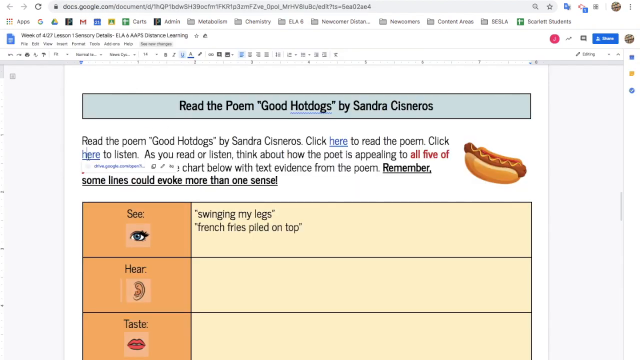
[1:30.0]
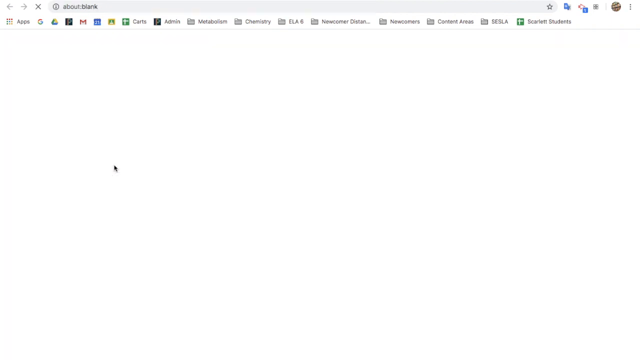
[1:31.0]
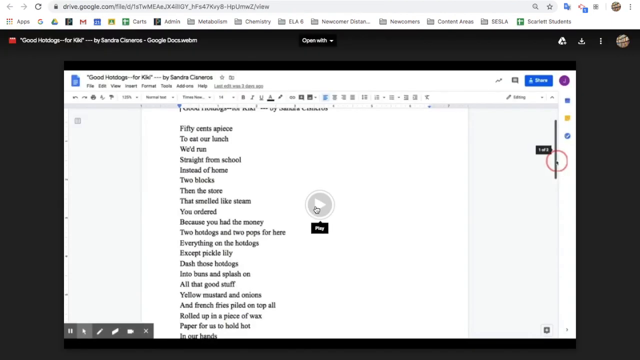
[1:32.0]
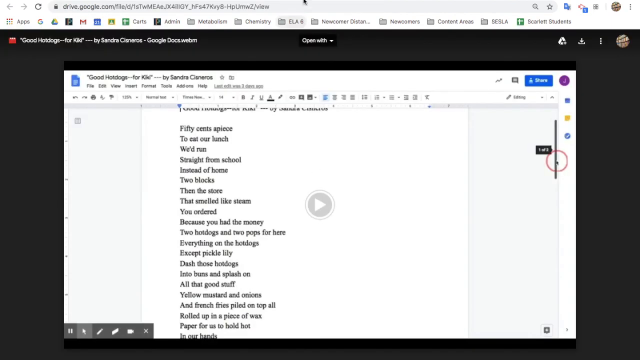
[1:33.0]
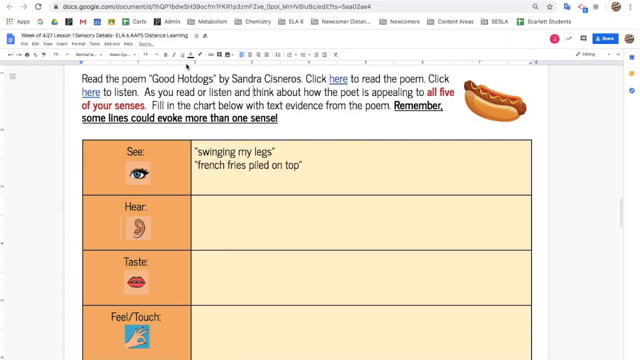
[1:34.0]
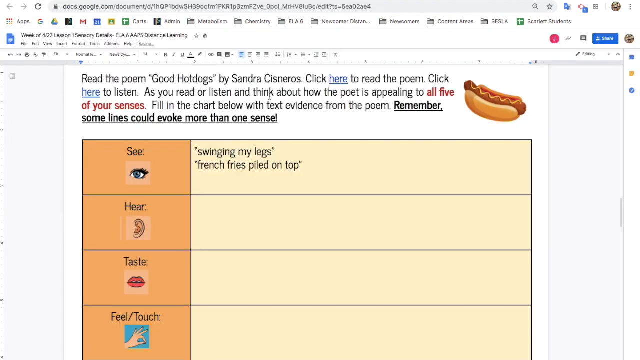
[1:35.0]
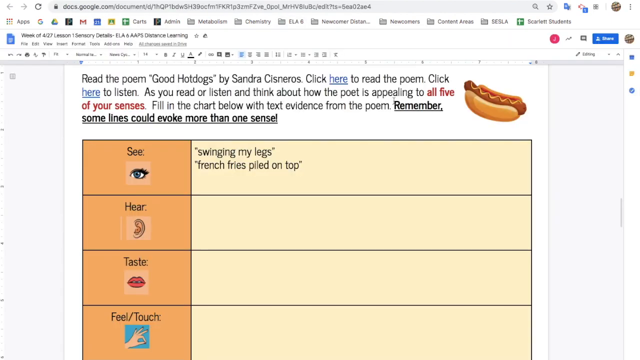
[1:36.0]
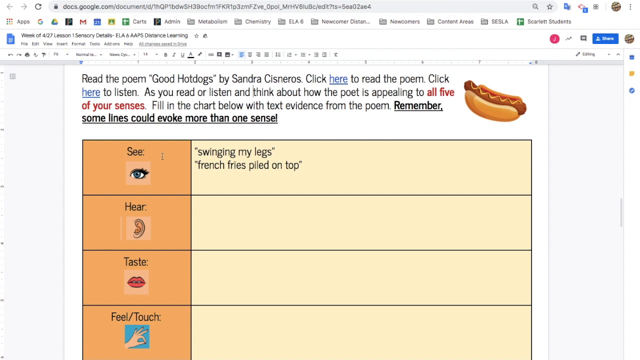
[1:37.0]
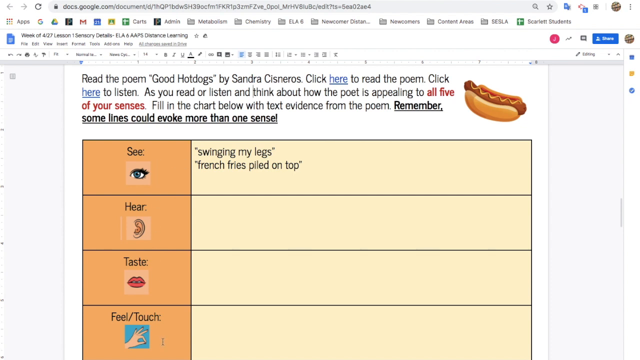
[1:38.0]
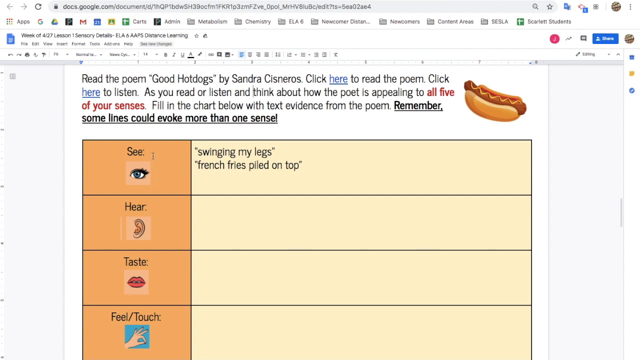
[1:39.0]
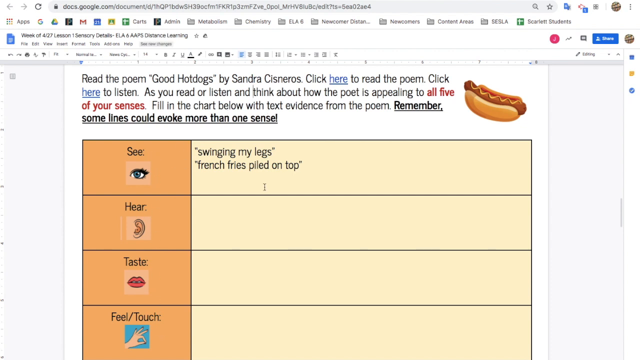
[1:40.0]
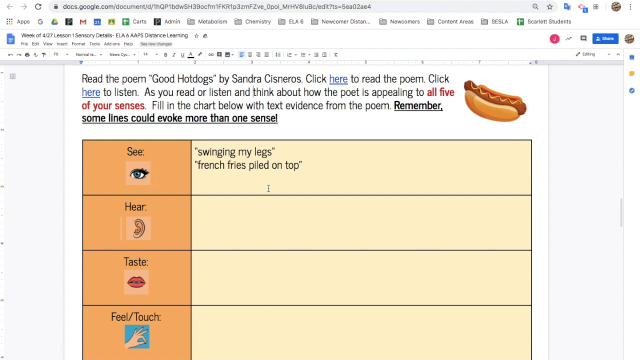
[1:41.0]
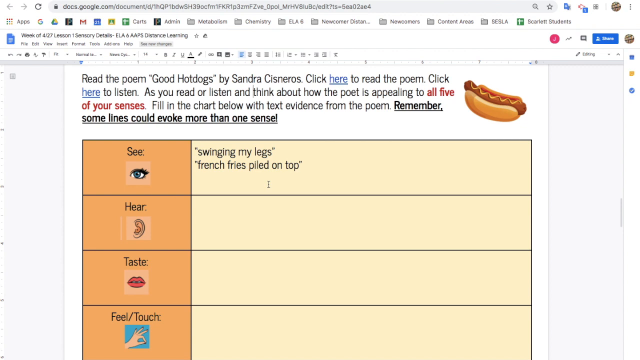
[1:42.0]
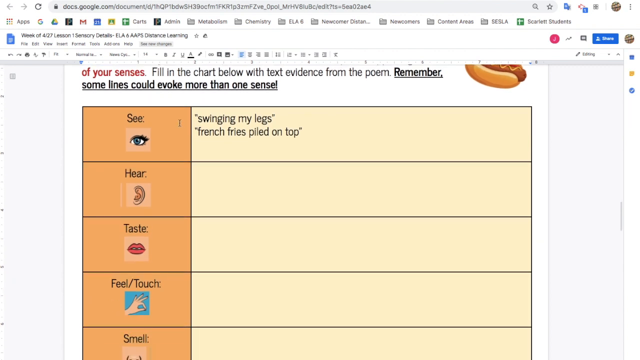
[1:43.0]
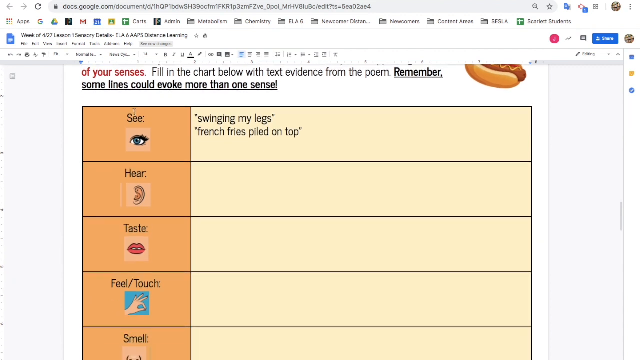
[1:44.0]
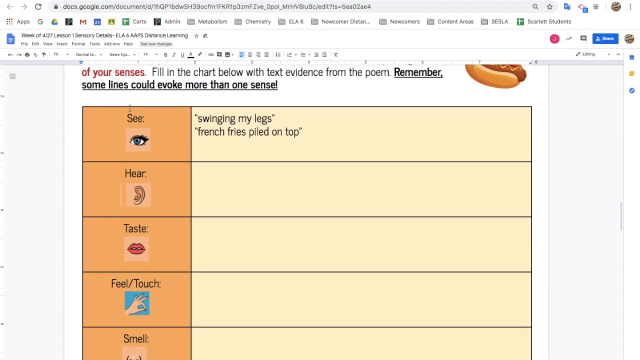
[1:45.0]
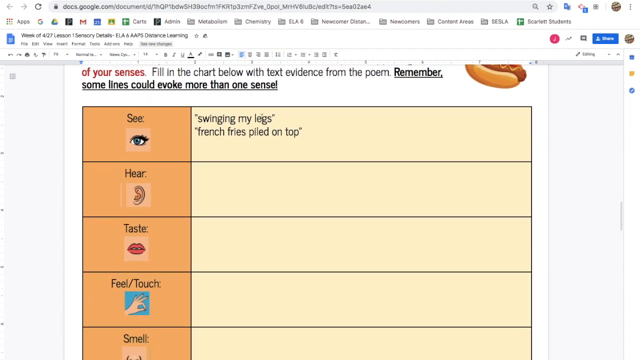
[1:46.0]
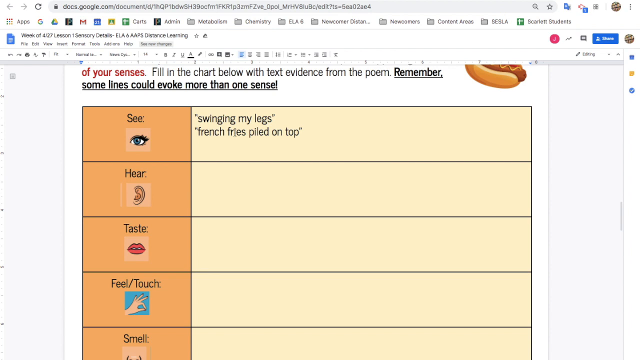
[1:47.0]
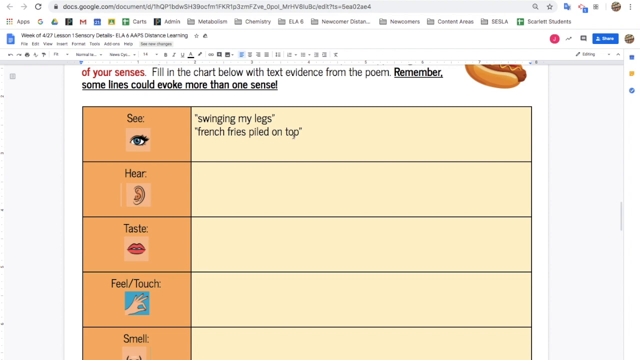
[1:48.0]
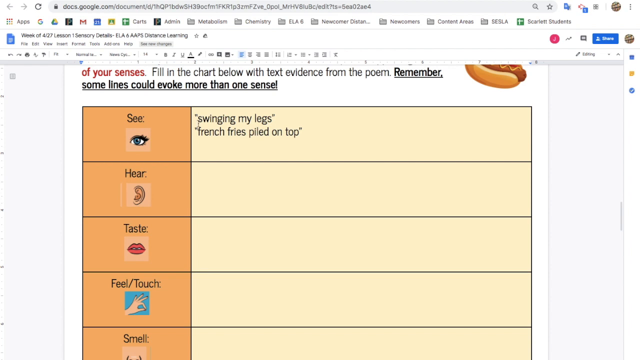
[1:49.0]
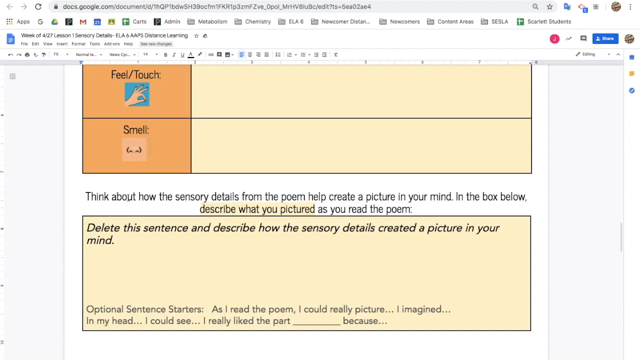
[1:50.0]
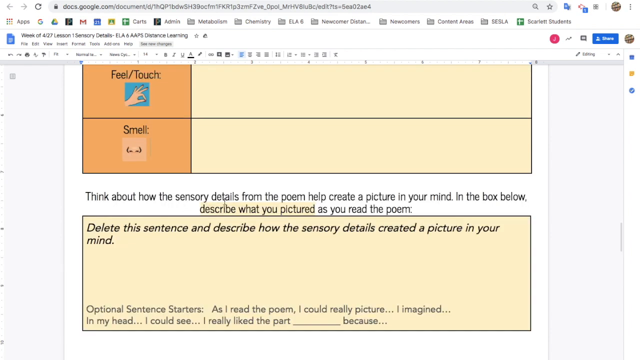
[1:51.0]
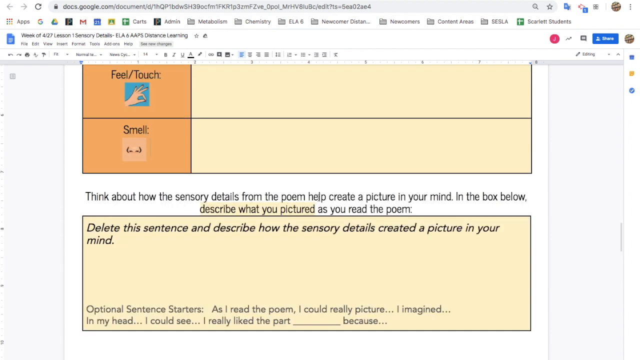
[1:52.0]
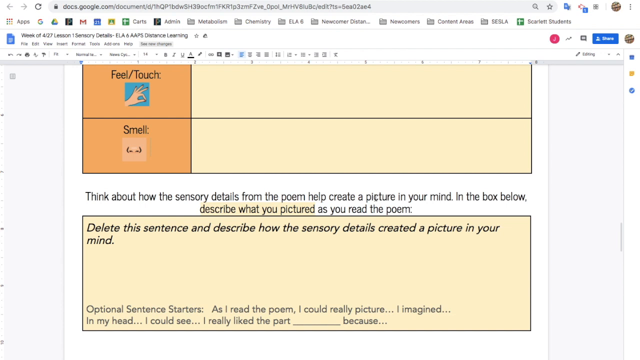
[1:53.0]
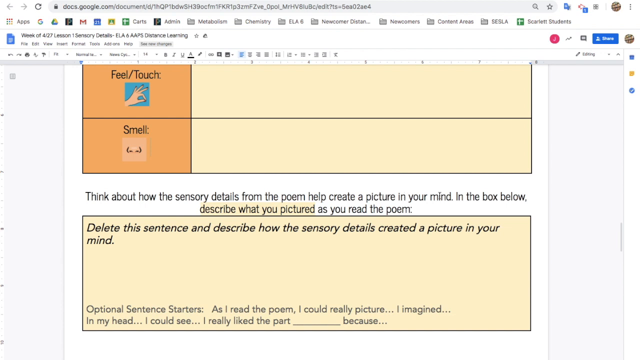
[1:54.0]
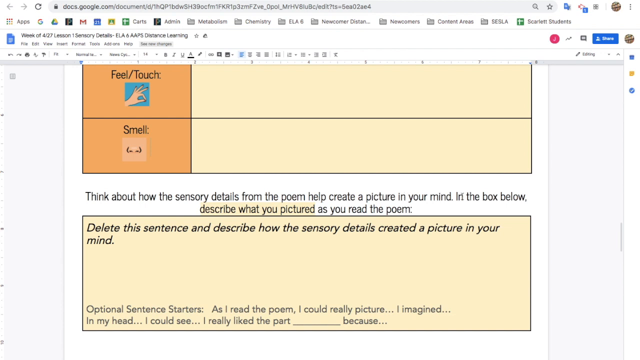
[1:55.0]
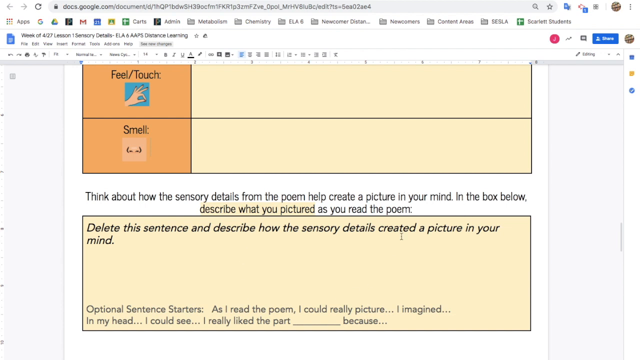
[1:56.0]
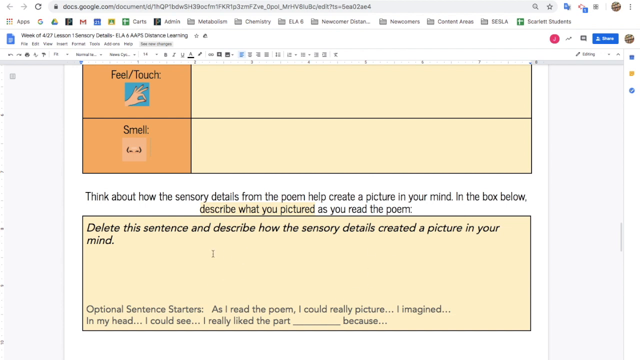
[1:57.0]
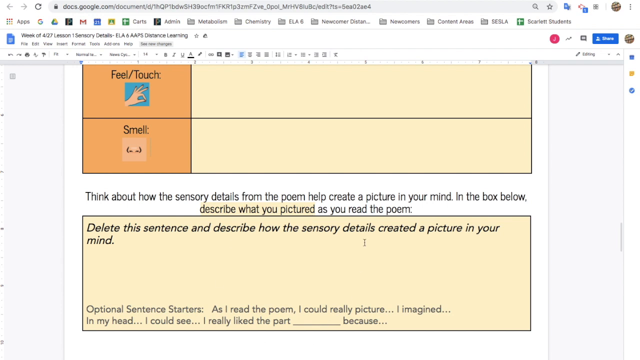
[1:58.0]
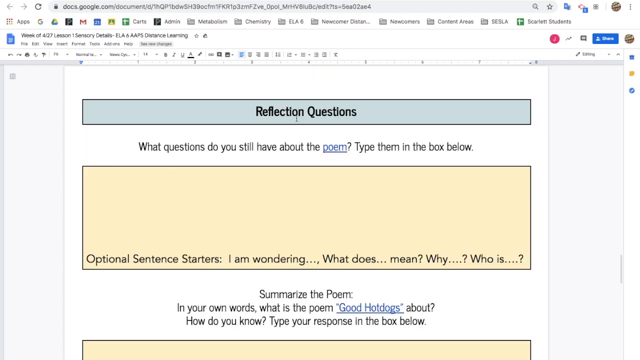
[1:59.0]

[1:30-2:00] The page for reading the poem Good Hot Dogs by Sandra Cisneros continues, with text about reading the poem and appealing to all five senses. It then switches to the page with the actual poem shown on it. The view kind of zooms into the poem and then goes back to the previous page. Scrolling down, the page shows a section with text reading "think about how the sensory details from the poem will help you create a picture in your mind. In the box below describe what you pictured as you read the poem. Delete this sentence and describe how the sensory details created a picture in your mind."